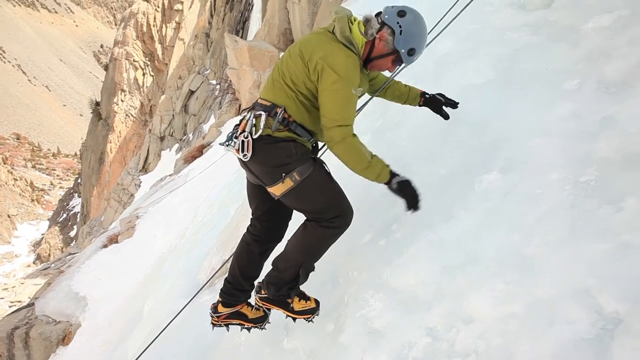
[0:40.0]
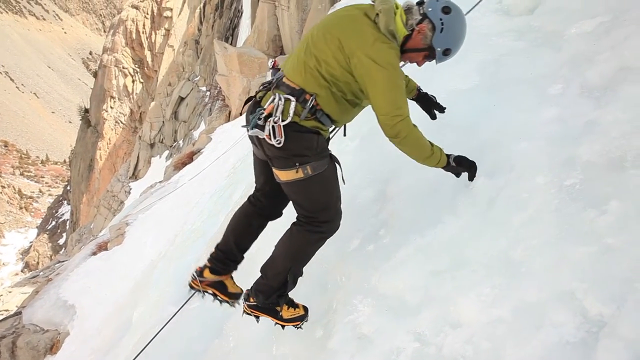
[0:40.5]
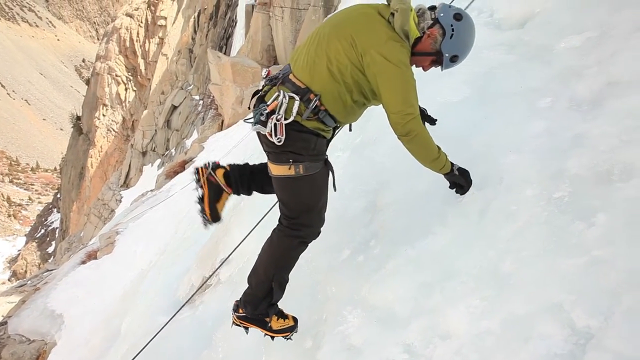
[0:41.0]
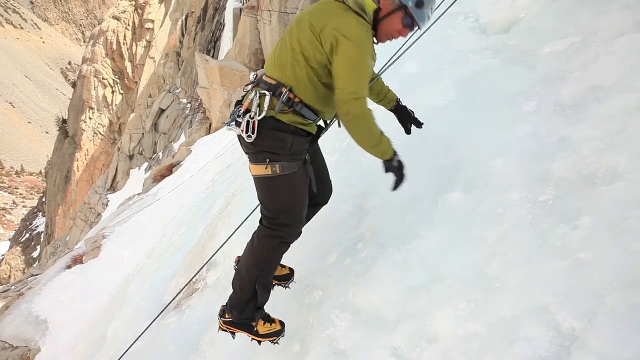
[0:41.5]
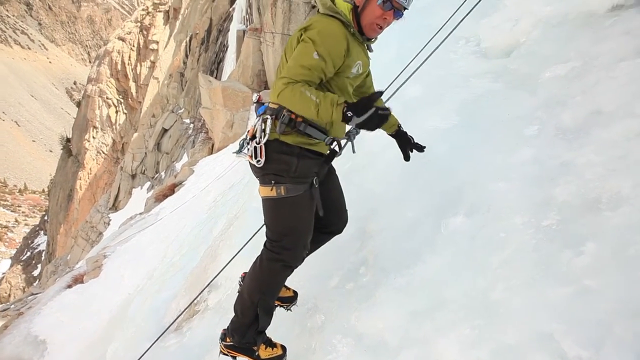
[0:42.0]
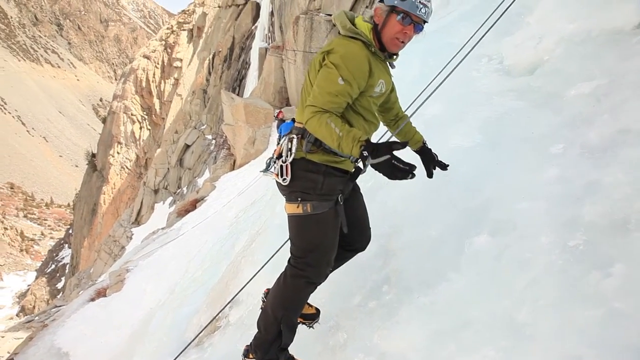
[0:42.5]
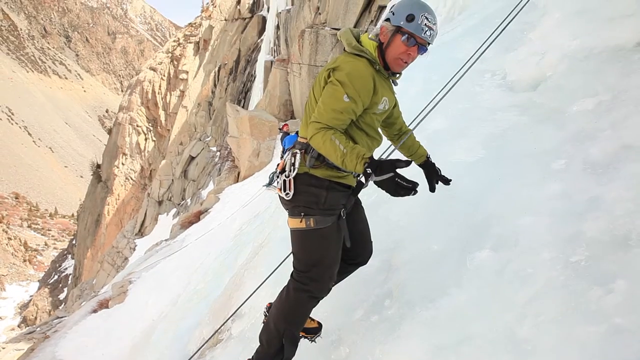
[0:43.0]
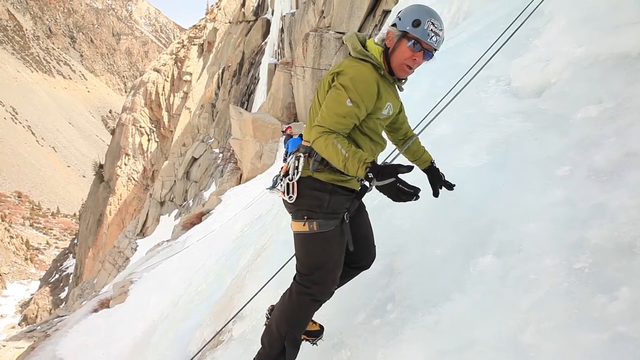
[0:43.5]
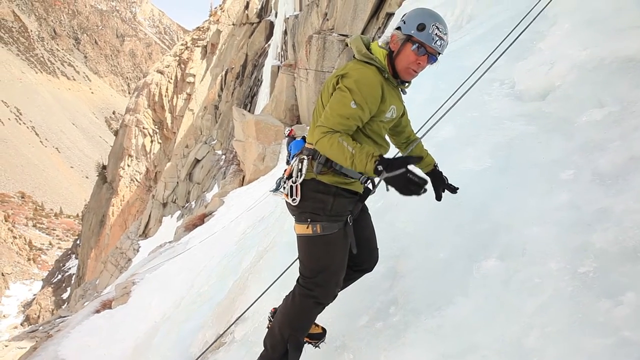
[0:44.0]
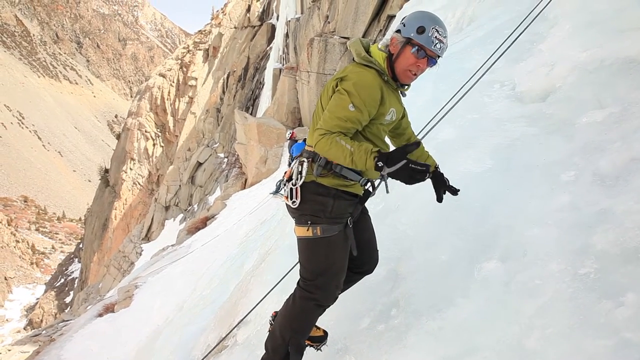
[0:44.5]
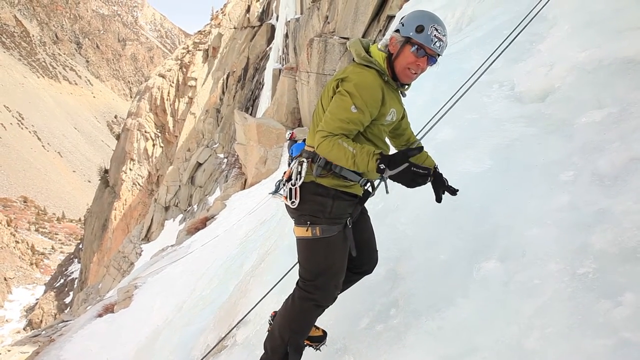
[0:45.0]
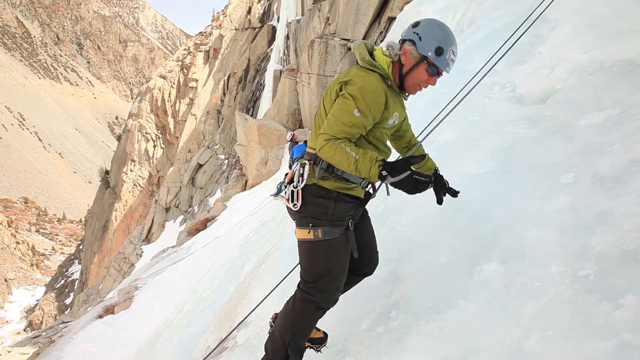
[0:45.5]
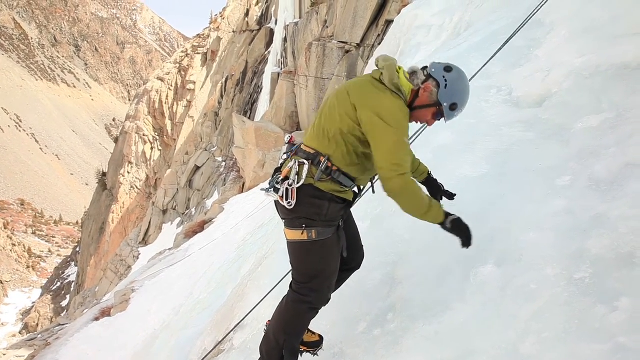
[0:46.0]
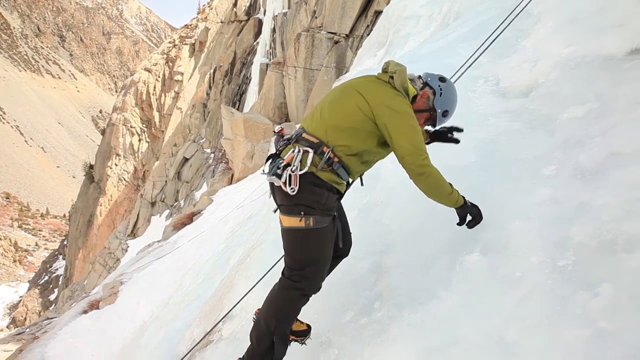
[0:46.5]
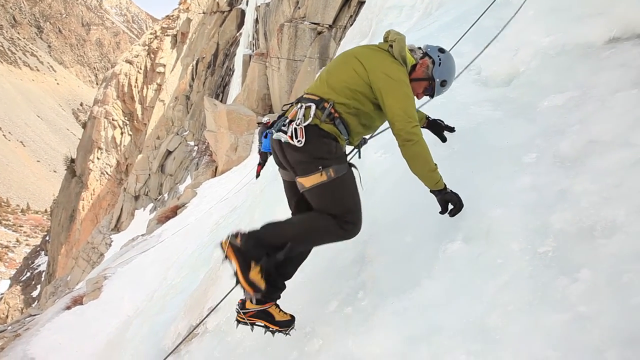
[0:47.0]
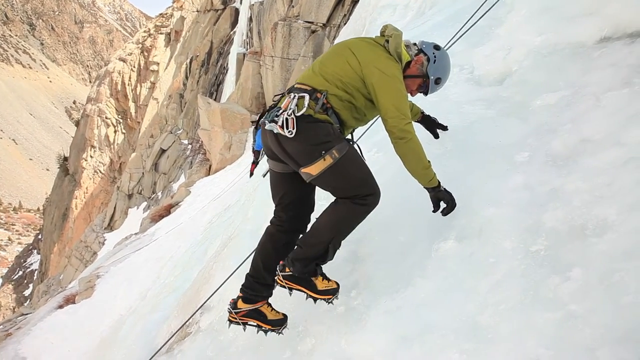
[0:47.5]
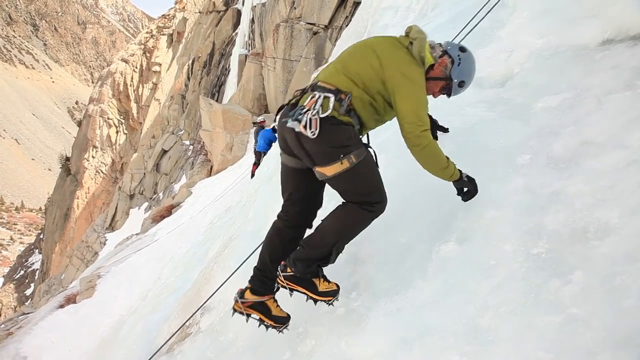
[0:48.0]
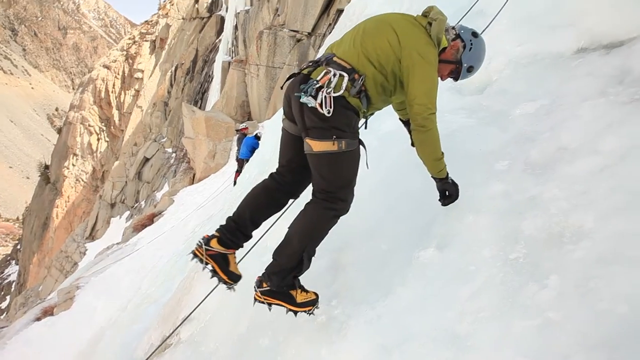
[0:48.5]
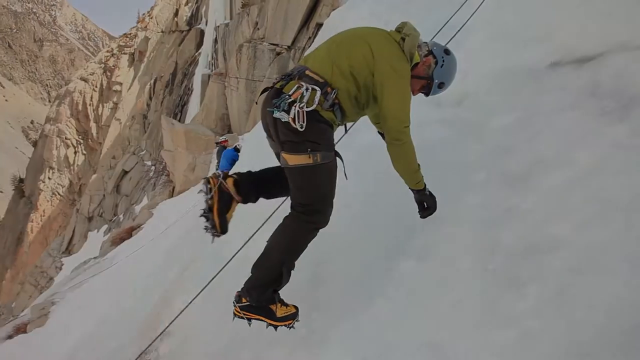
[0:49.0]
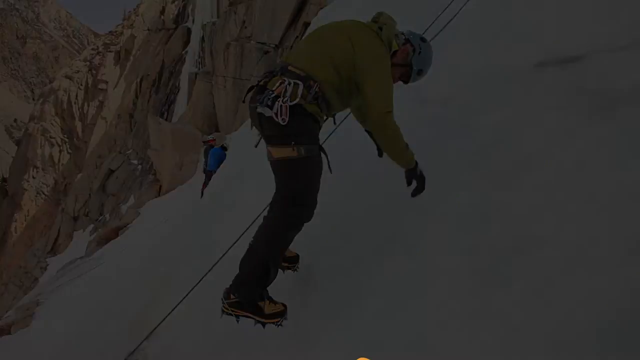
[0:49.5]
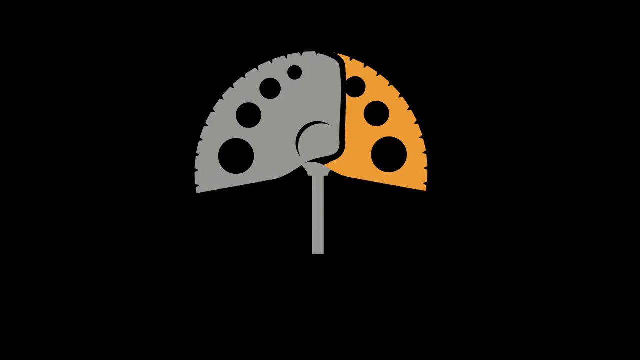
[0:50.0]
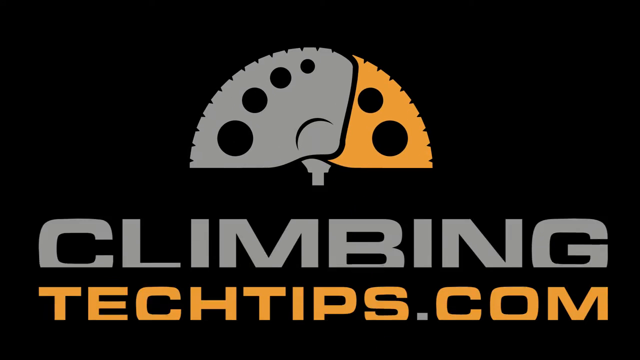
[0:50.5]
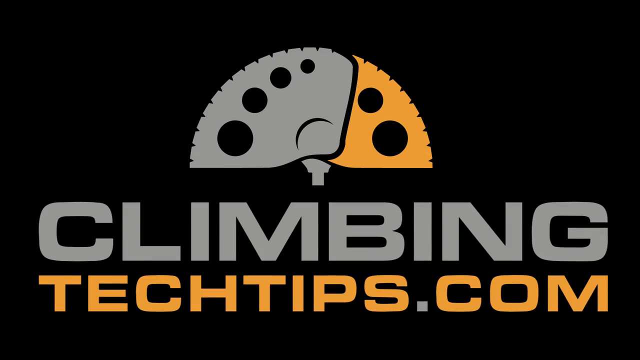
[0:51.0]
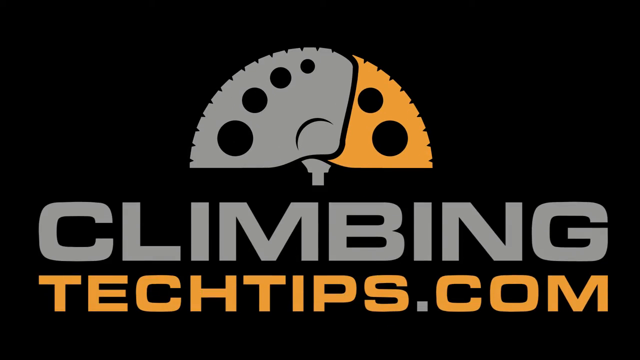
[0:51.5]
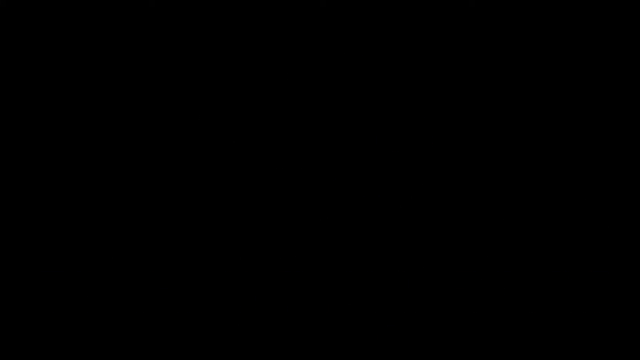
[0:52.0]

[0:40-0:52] A man demonstrates how to walk up the side of an icy mountain wearing boots with spikes. He picks up his left foot and digs the toe into the ice on the side of the mountain, then picks up his right foot and kicks his toe into the mountainside, digging the spike into the ice, repeating this with each foot as he walks upward. He has ropes tied to him and wears climbing gear, with calipers and clamps on the side of the tool belt he is wearing.